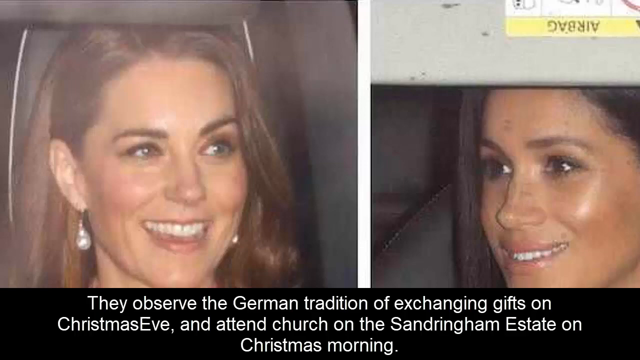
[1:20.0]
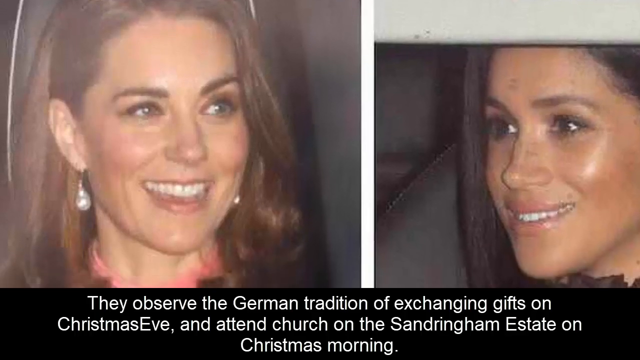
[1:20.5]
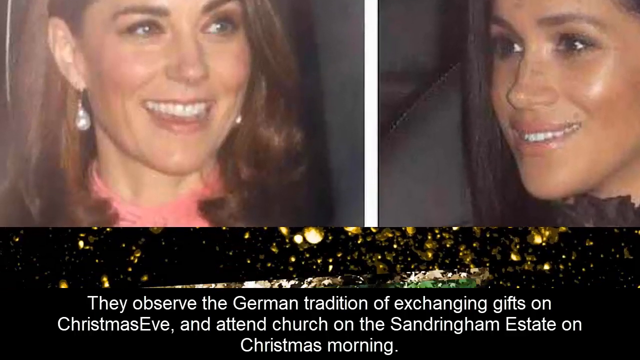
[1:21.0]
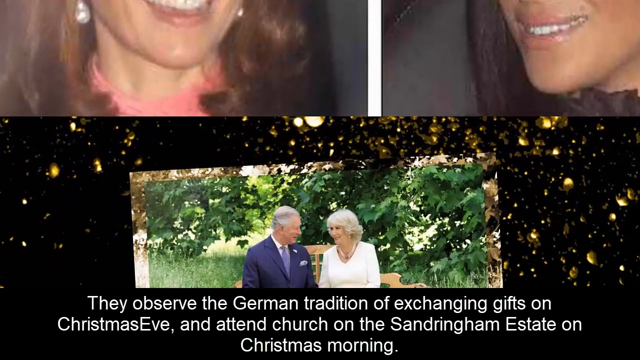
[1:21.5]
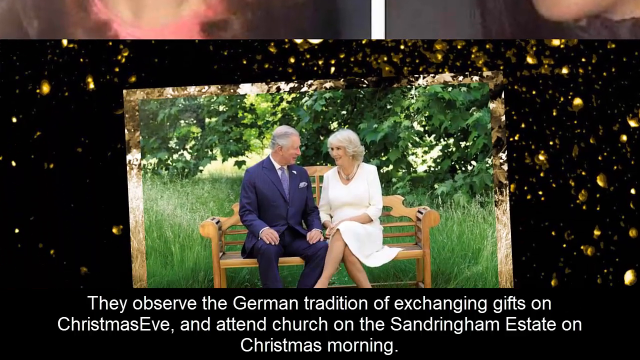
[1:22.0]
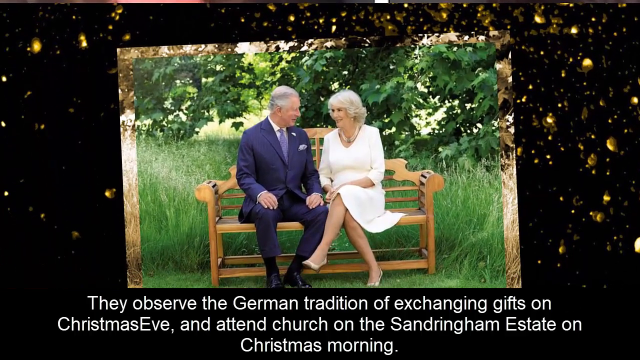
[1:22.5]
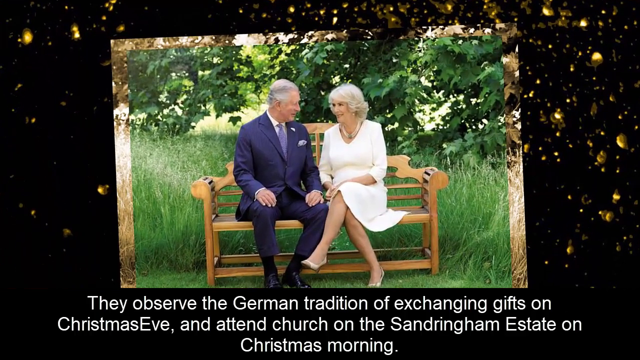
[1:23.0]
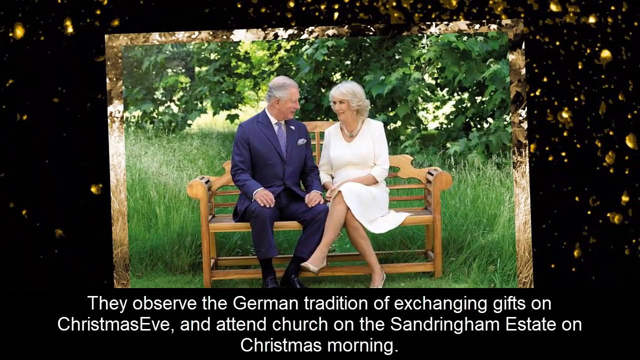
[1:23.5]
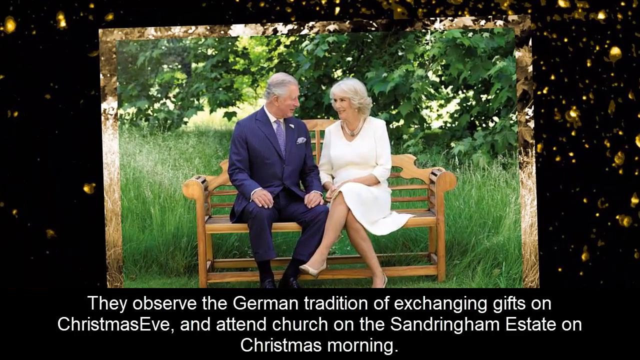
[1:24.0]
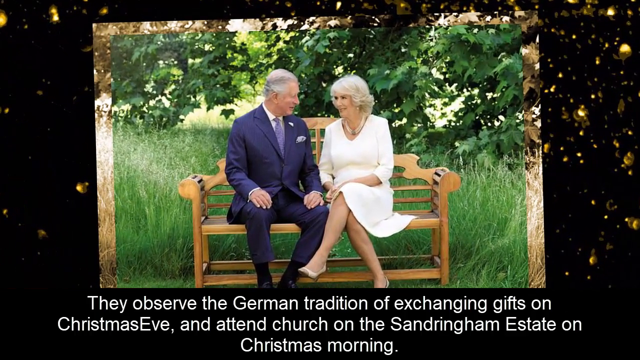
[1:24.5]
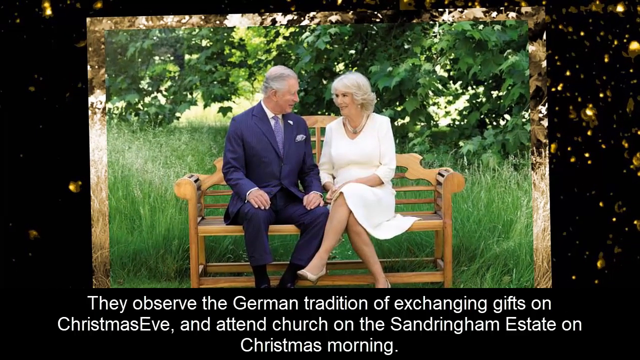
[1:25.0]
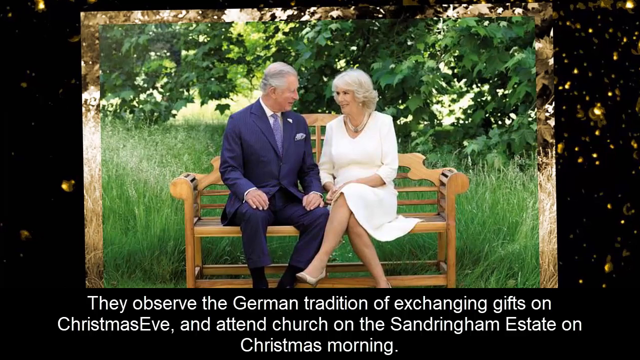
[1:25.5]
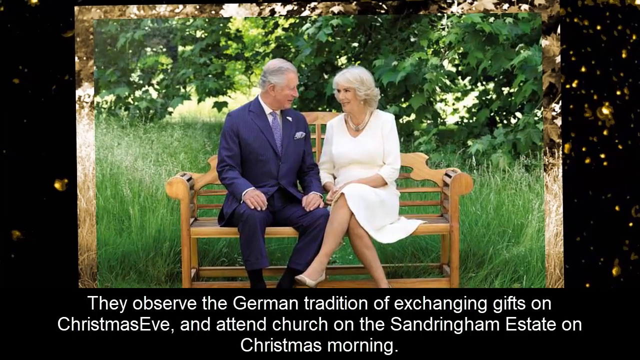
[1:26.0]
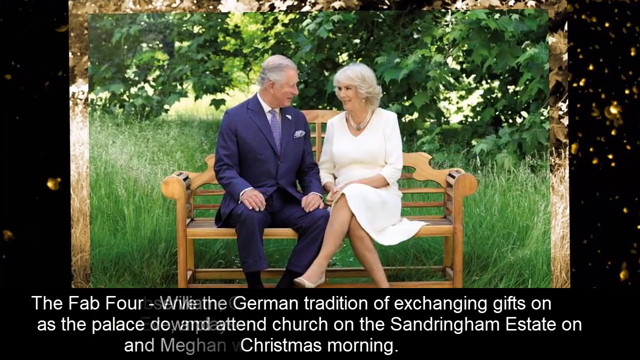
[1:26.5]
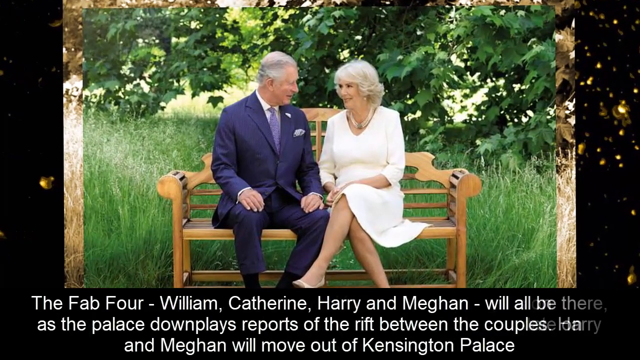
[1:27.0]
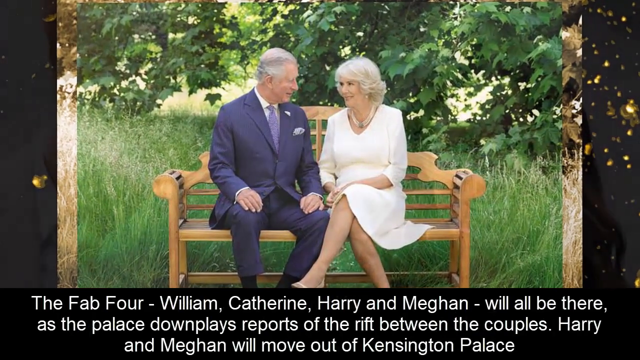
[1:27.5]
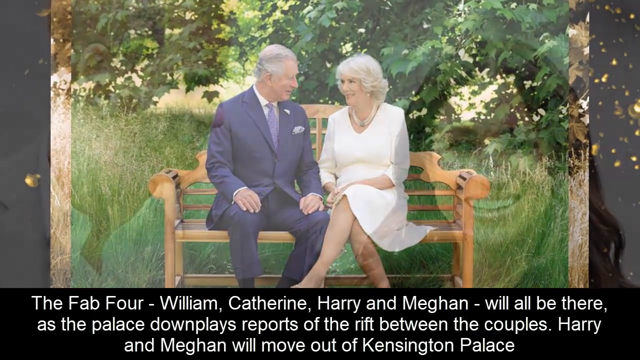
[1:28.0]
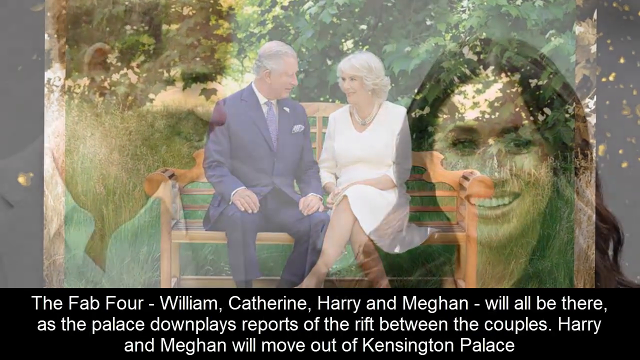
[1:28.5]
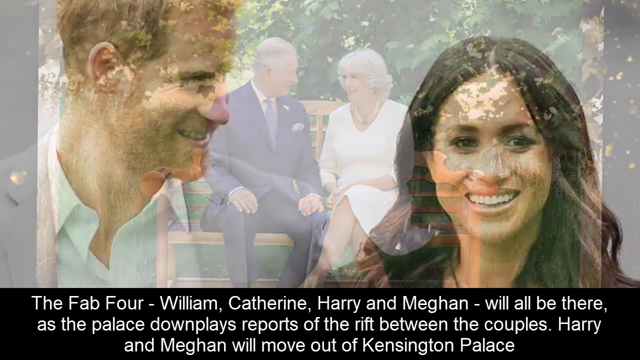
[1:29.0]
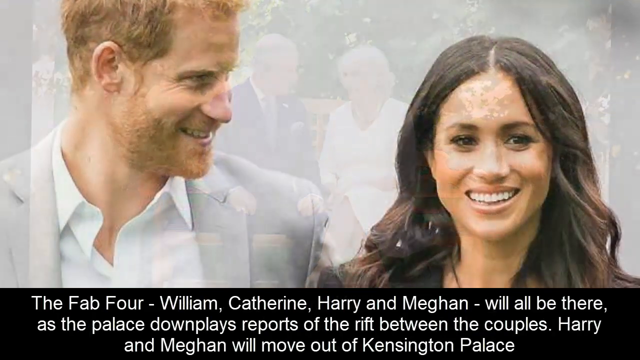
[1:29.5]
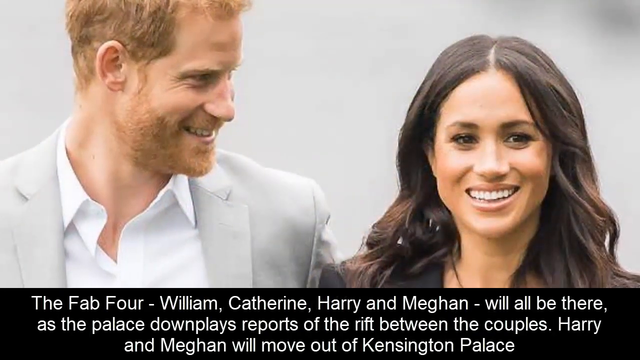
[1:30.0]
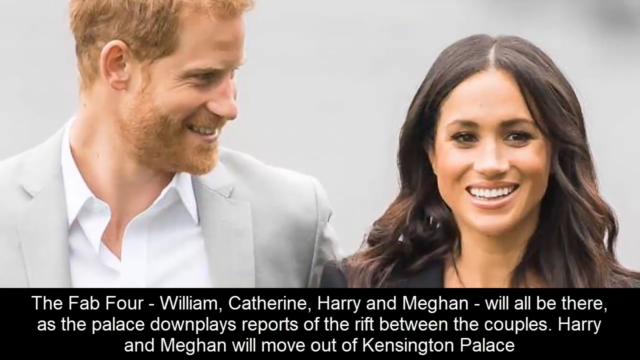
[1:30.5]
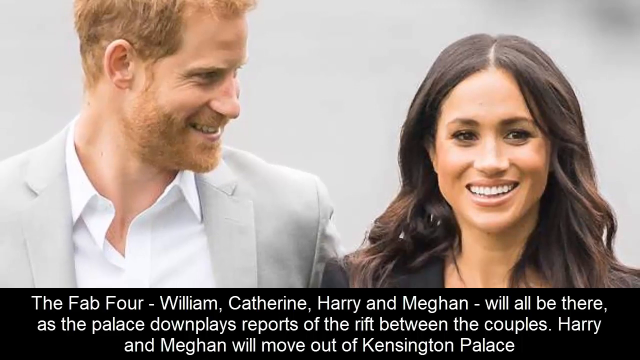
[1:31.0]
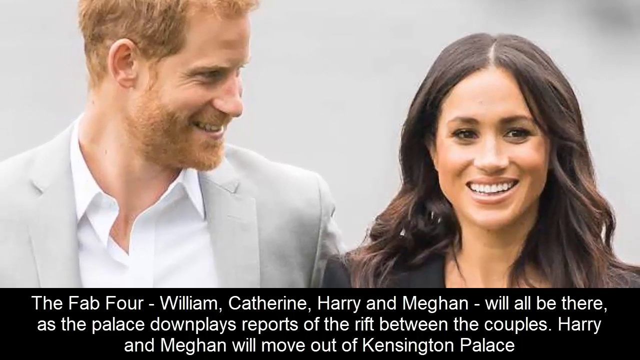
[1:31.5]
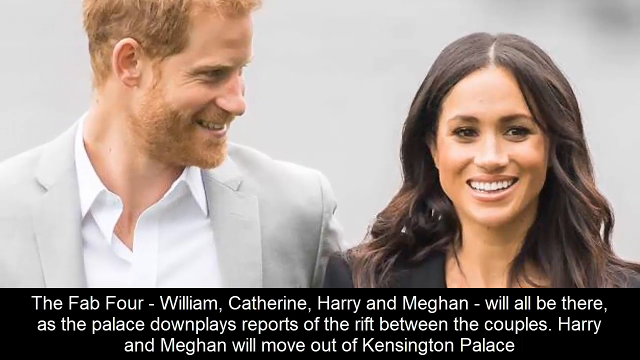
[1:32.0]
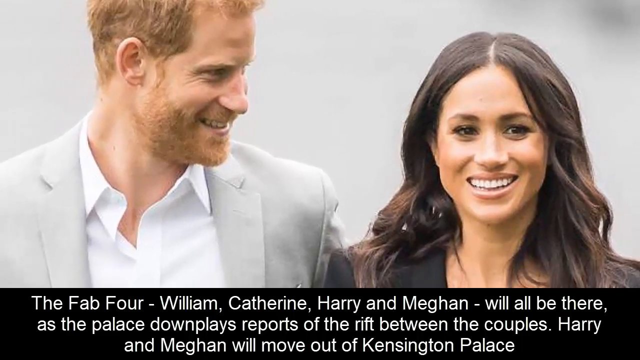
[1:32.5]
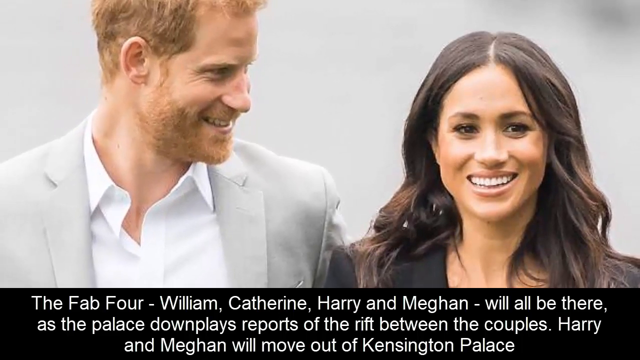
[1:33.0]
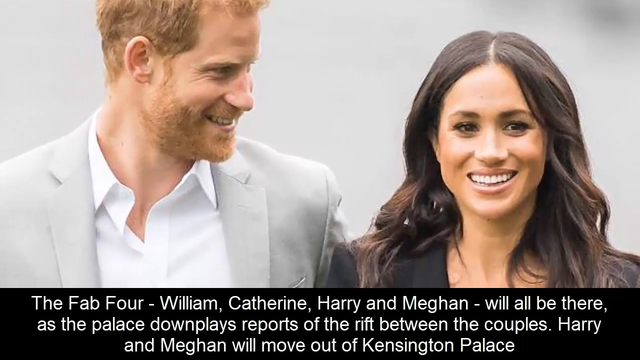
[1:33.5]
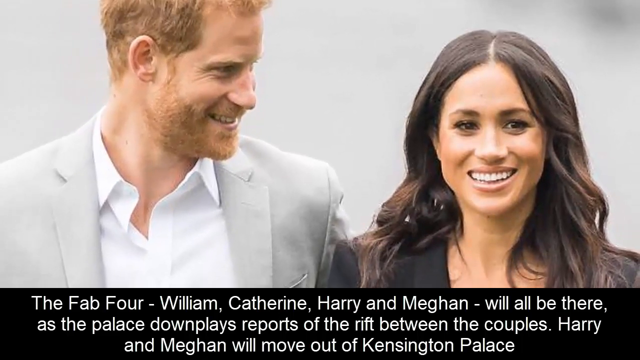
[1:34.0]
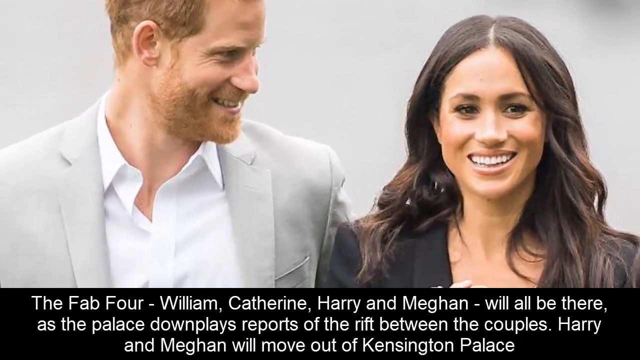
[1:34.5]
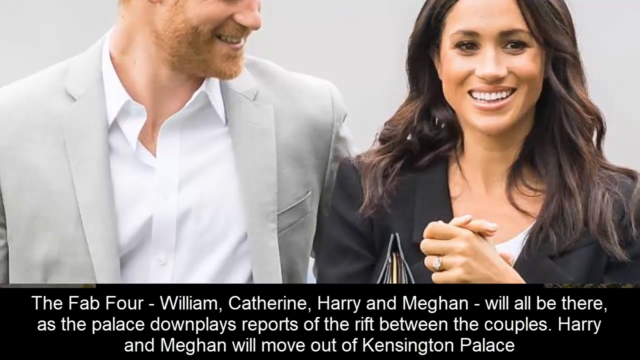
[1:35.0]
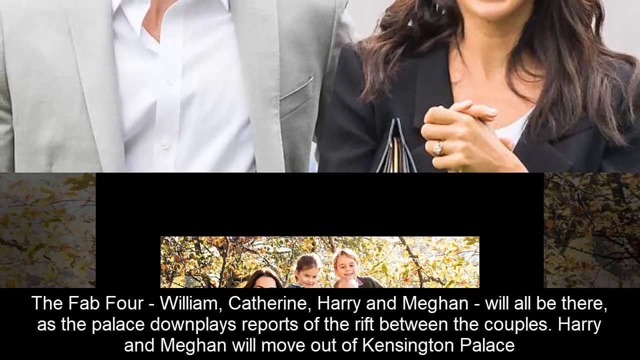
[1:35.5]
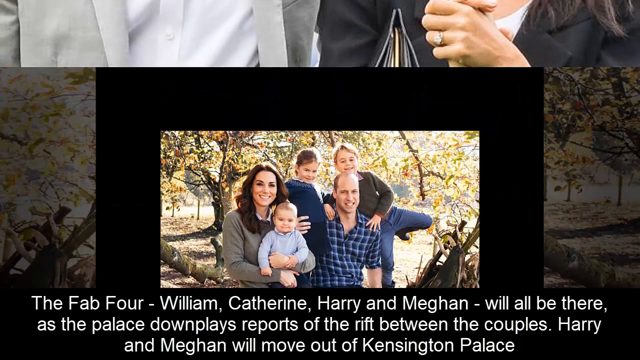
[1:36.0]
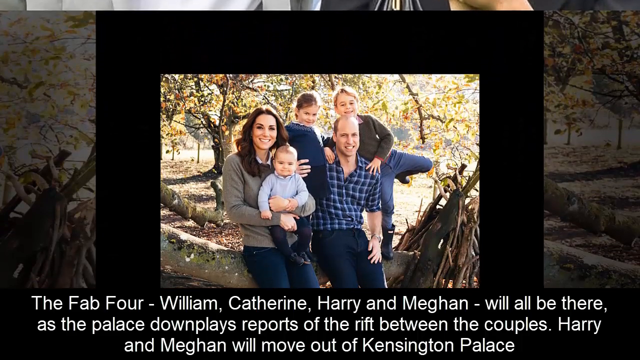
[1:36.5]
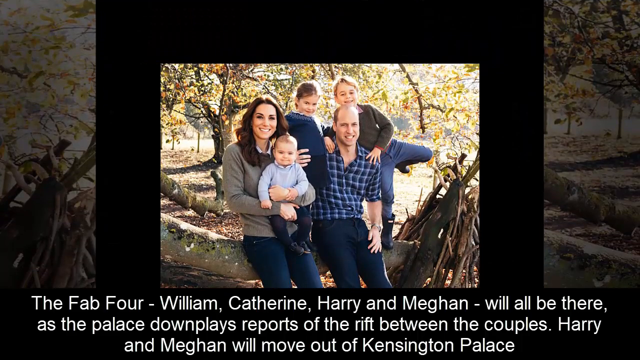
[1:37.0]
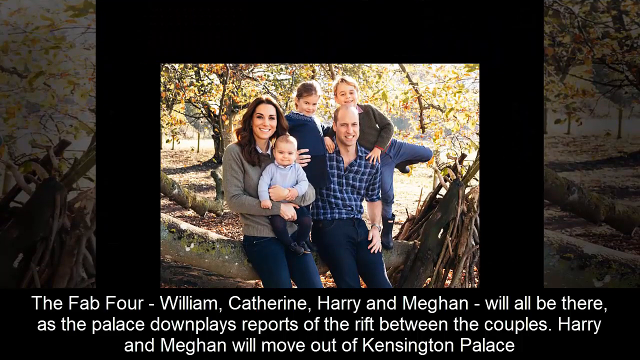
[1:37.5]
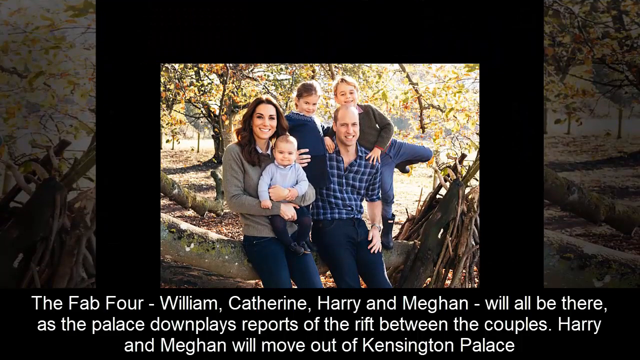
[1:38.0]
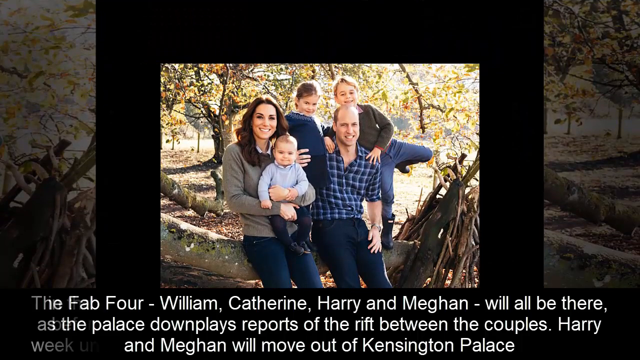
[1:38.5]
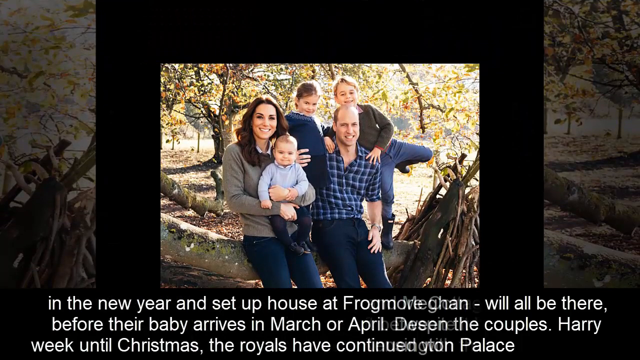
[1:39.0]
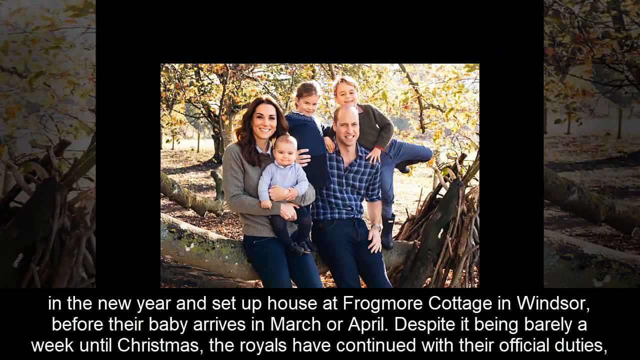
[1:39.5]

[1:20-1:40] A close-up of Meghan's face in the paparazzi images shows her with the car mirror down and the airbag's emergency warning signs visible. Her tennis-style earrings are noticeable. The camera pans down into another shot of Prince Philip and what looks like Queen Elizabeth sitting on a bench behind what looks like a bush. The camera pans down again into a shot of Prince Harry and Meghan, and more images of the family come up on screen with subtitles. An image of the other brother with his family appears, and the subtitles at the bottom change.